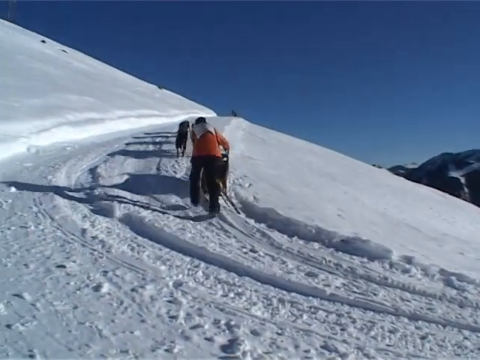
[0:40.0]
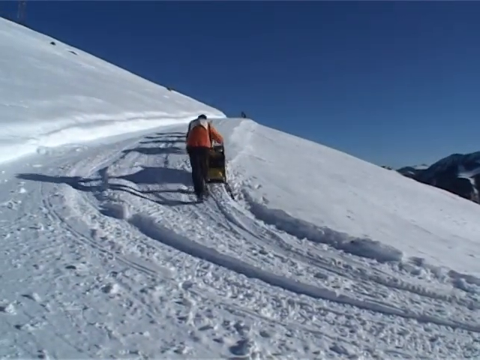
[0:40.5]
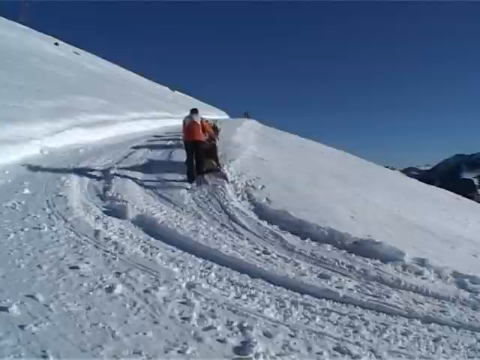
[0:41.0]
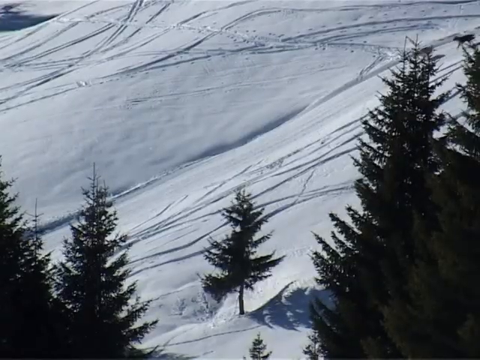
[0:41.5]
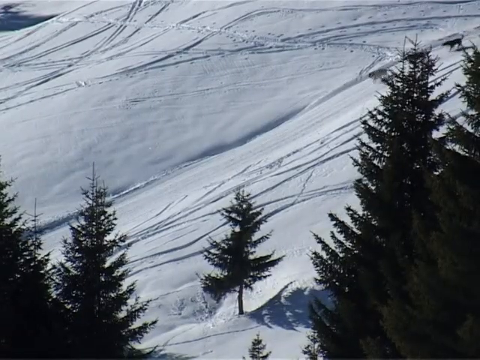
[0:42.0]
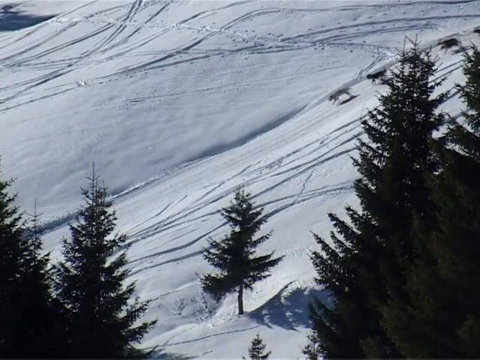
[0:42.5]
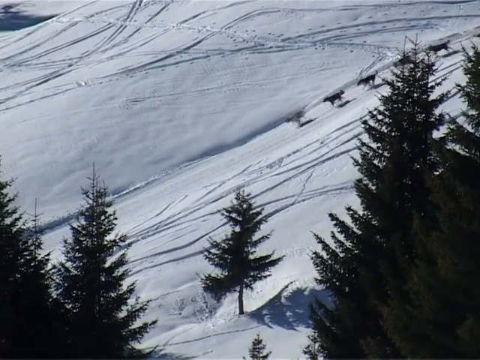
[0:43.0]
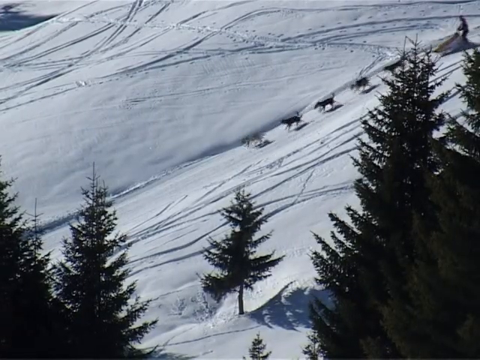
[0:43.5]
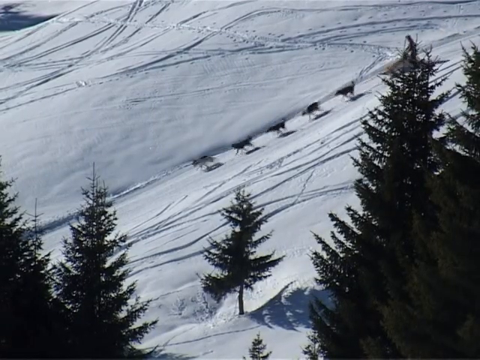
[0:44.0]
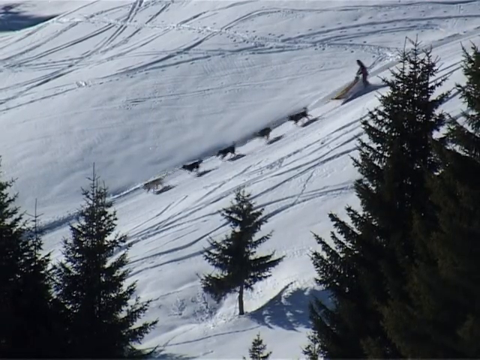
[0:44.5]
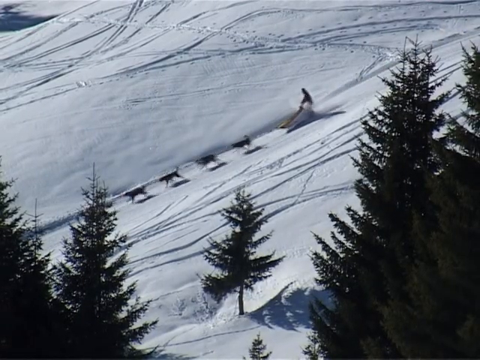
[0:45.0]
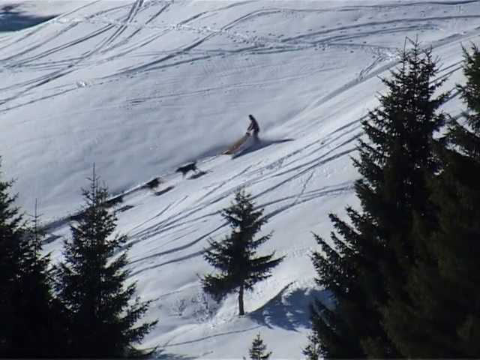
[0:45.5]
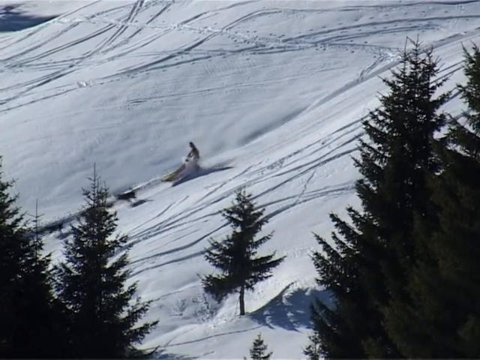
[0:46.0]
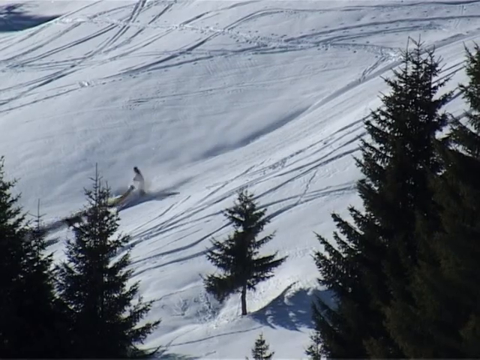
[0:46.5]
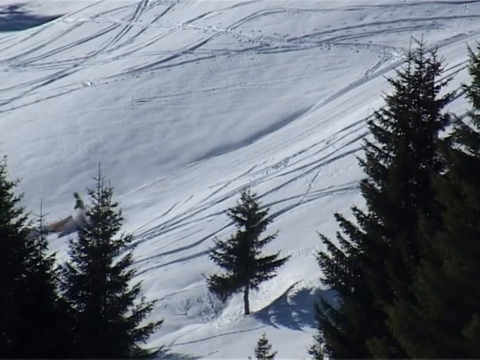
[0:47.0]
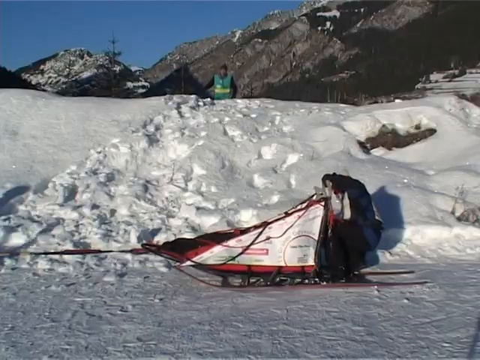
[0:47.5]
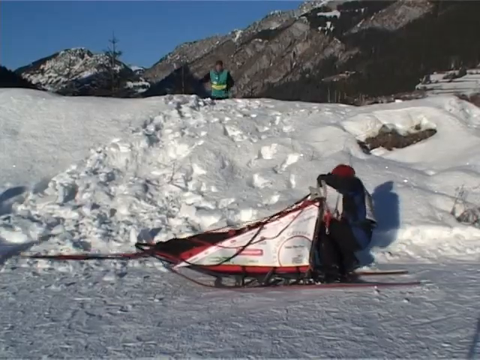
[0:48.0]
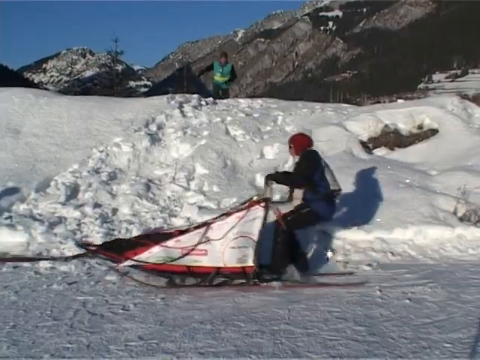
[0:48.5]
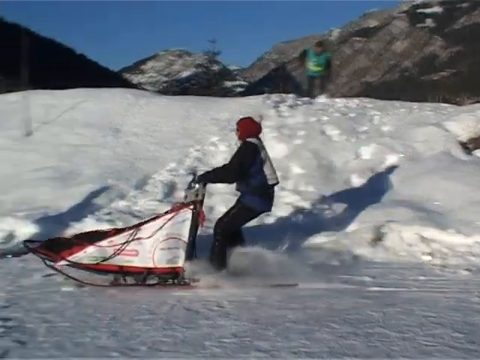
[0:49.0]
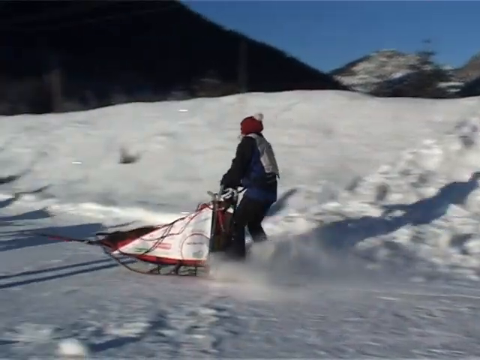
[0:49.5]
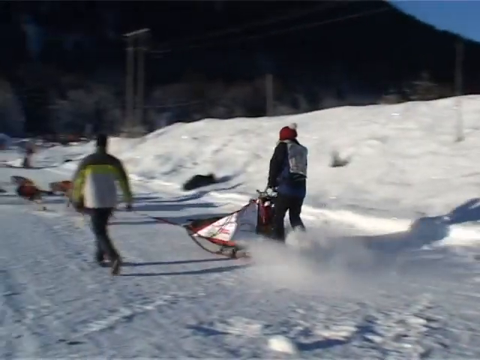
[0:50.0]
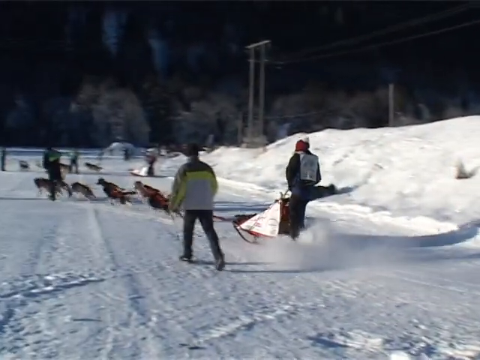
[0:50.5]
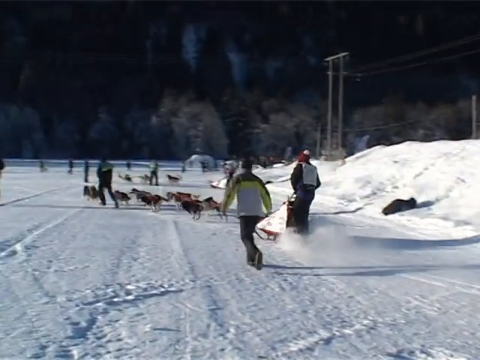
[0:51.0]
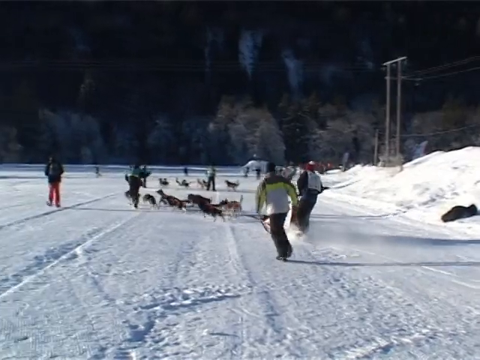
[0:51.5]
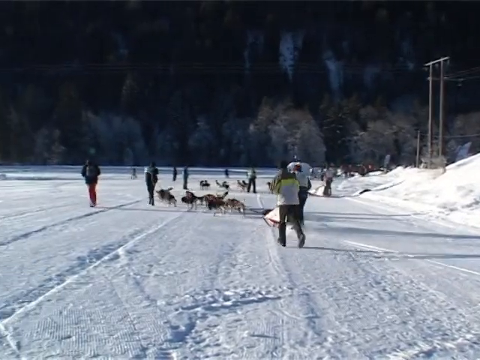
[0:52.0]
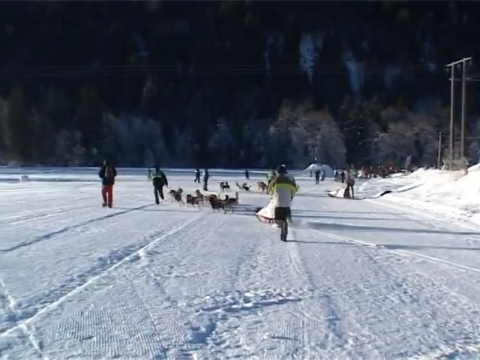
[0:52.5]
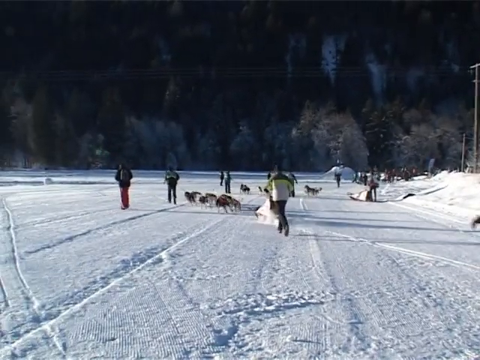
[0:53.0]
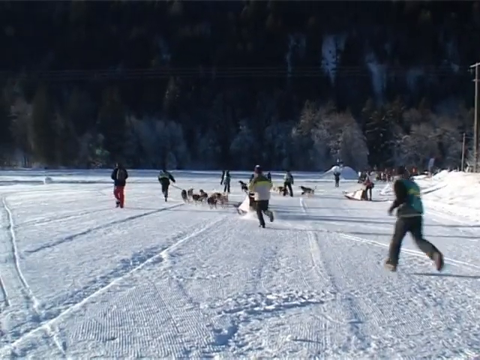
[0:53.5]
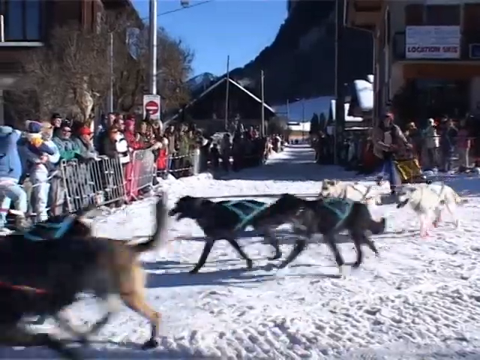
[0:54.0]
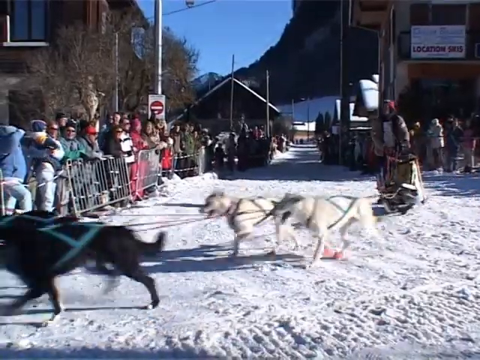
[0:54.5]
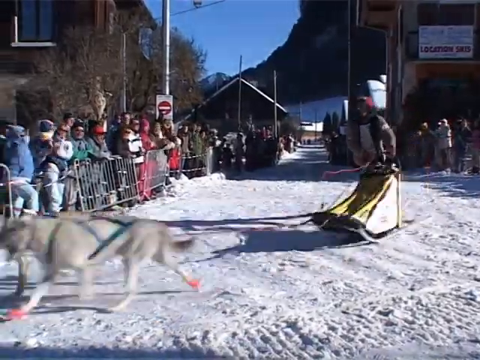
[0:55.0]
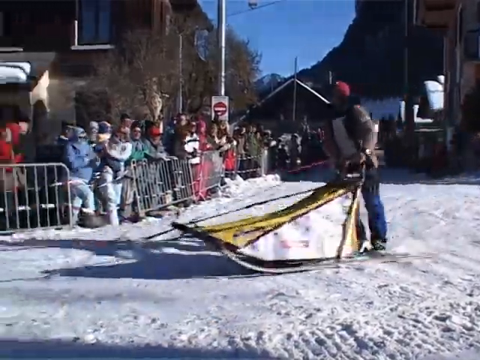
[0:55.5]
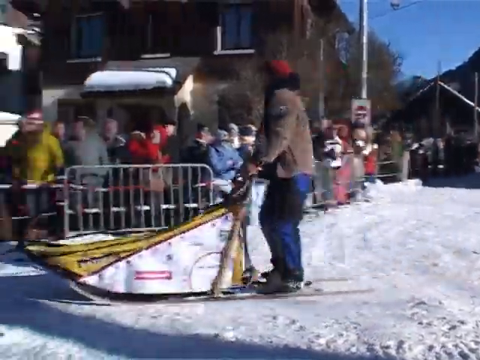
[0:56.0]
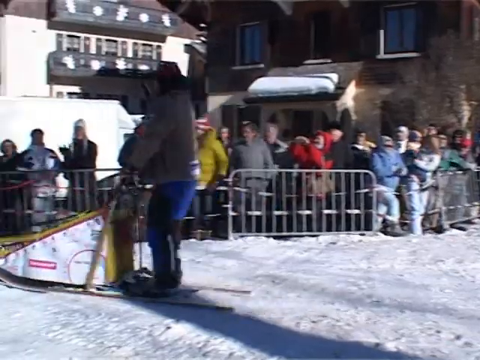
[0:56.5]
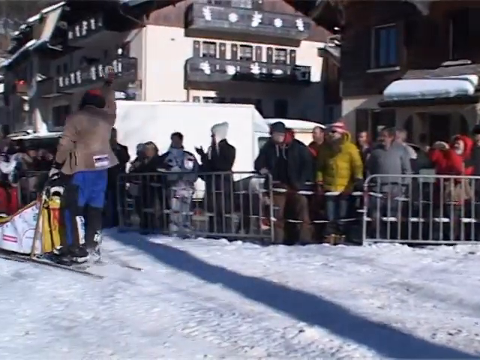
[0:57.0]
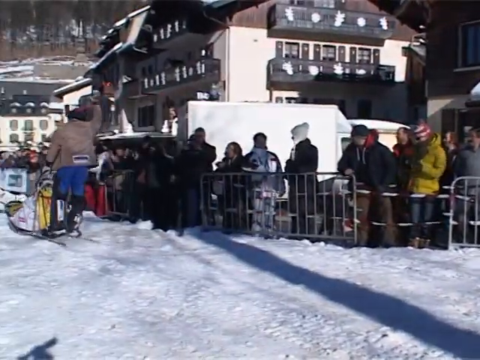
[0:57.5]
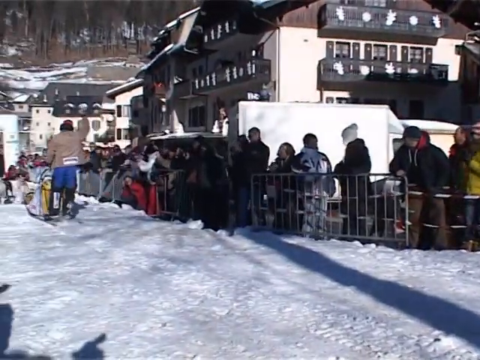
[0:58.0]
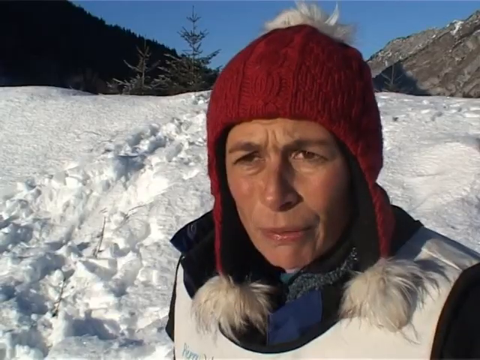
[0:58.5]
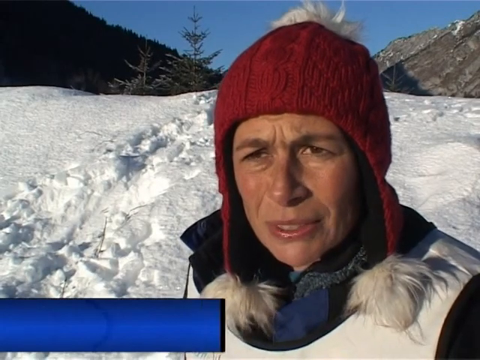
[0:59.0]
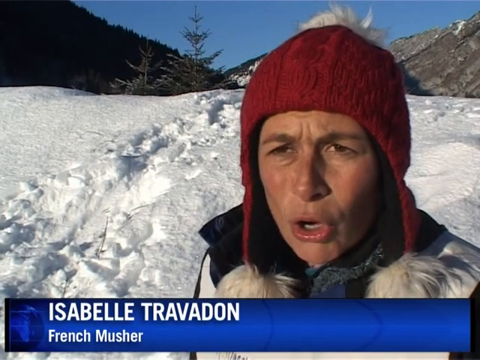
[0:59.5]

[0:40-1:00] On a very large snowy hill, a person has gotten off his sled to help his dogs. A team of five dogs then runs fast downhill. Different team setups are shown; one team has seven dogs. The dogs run to the left in pairs, two by two beside each other, going around a village. One of the racers holds his hand up, waving at the onlookers.